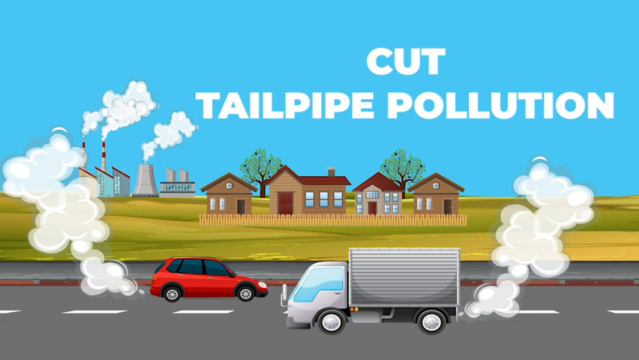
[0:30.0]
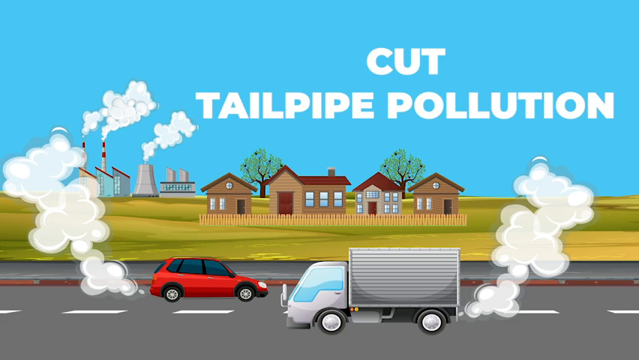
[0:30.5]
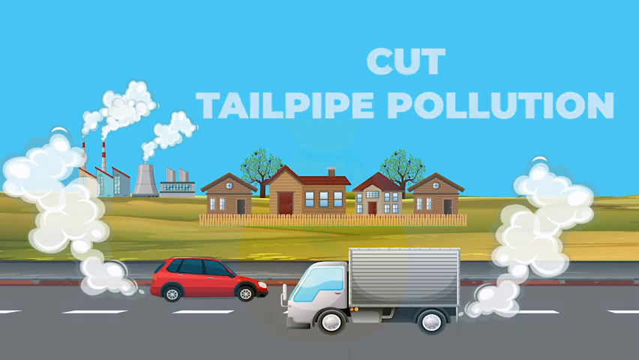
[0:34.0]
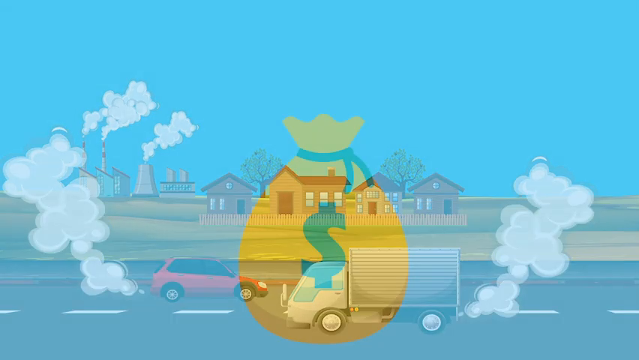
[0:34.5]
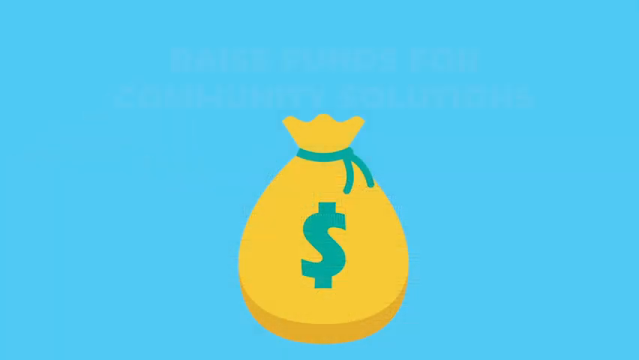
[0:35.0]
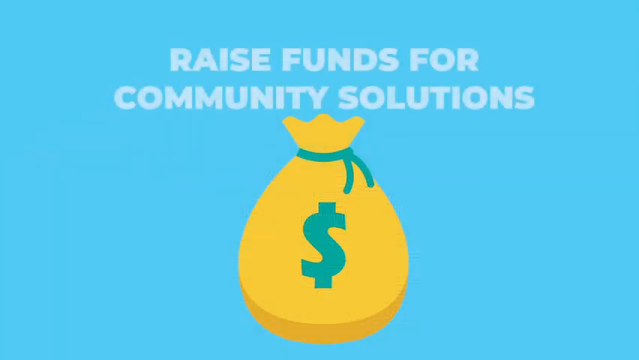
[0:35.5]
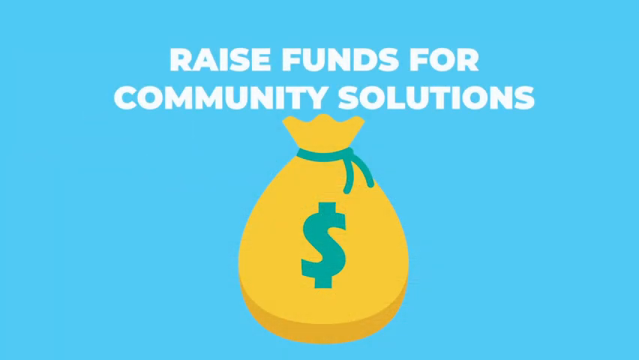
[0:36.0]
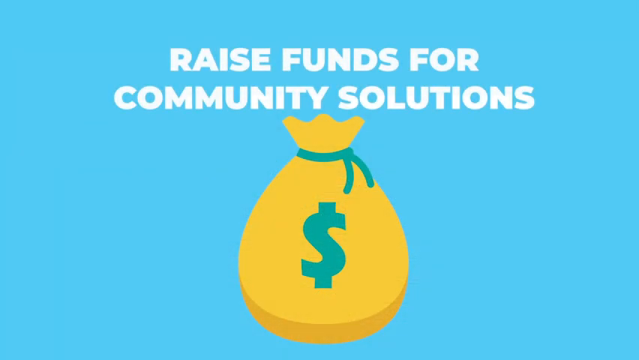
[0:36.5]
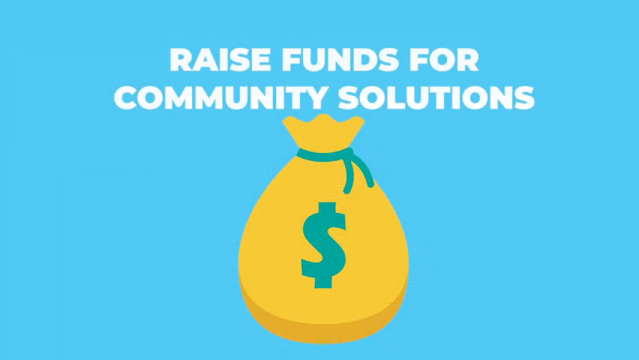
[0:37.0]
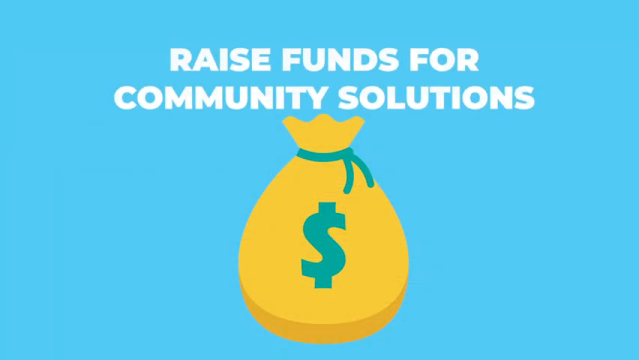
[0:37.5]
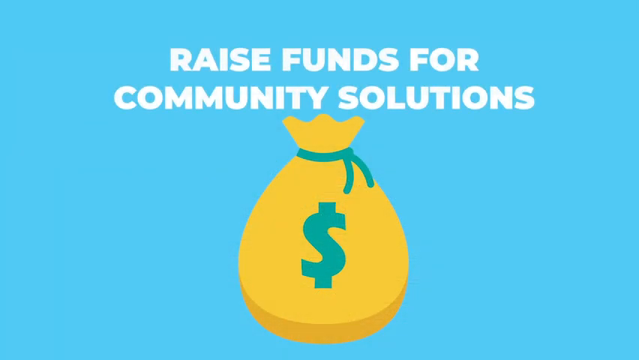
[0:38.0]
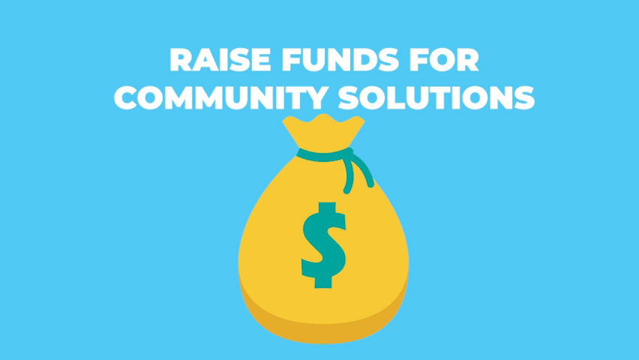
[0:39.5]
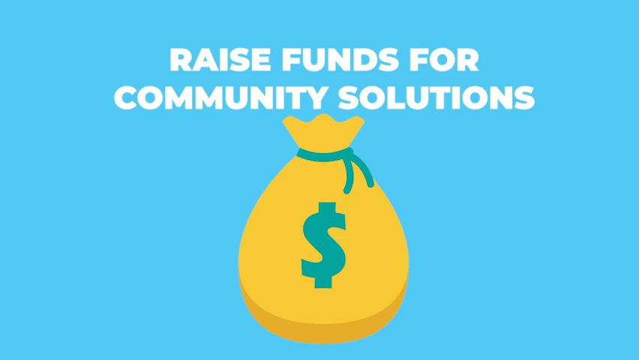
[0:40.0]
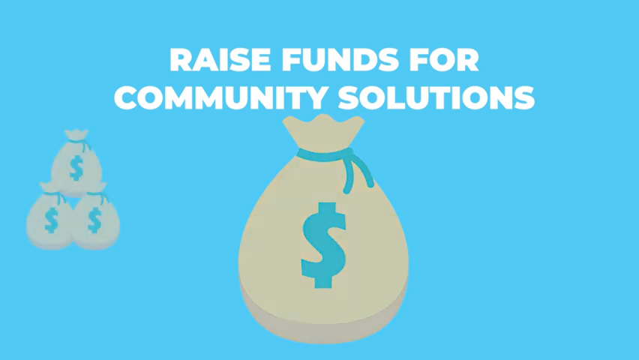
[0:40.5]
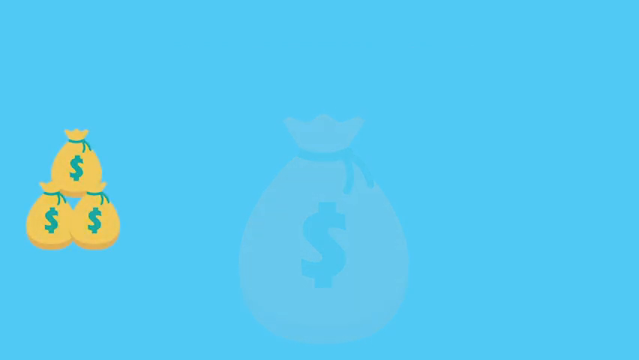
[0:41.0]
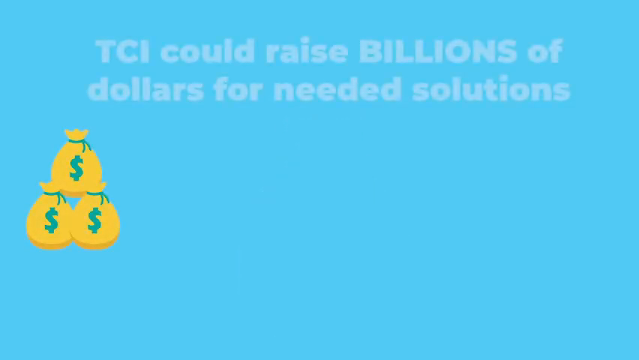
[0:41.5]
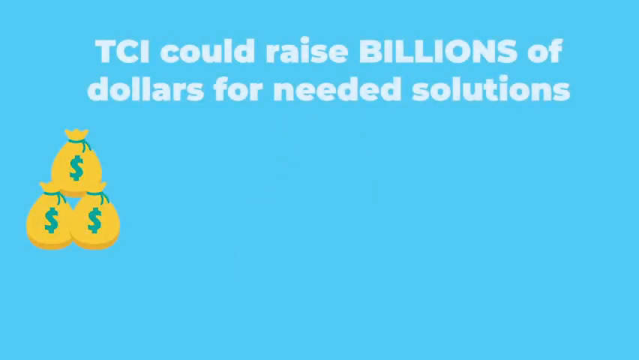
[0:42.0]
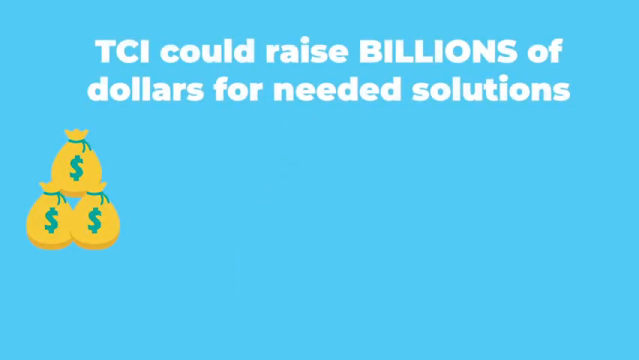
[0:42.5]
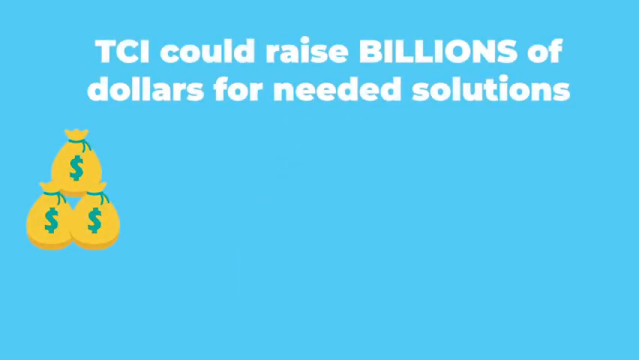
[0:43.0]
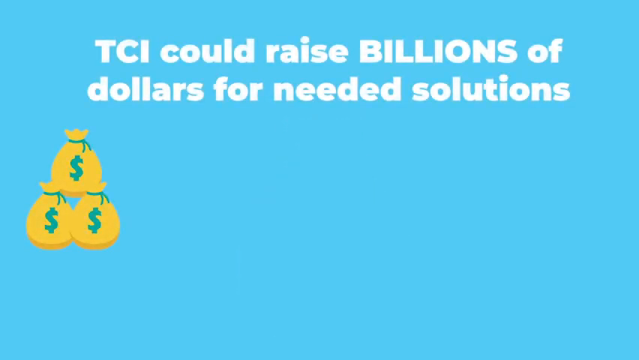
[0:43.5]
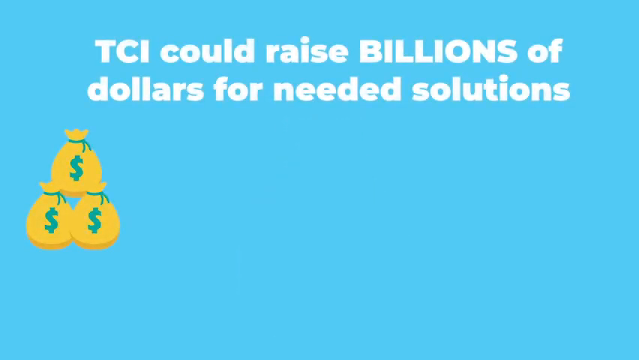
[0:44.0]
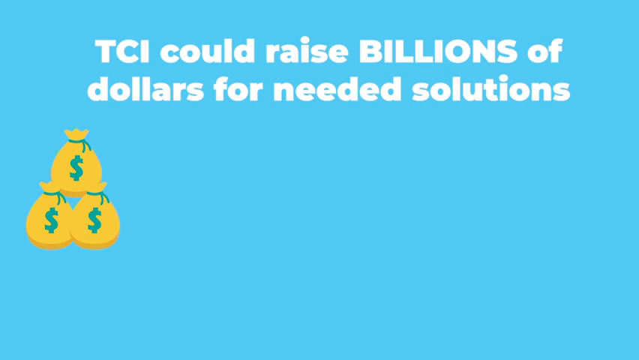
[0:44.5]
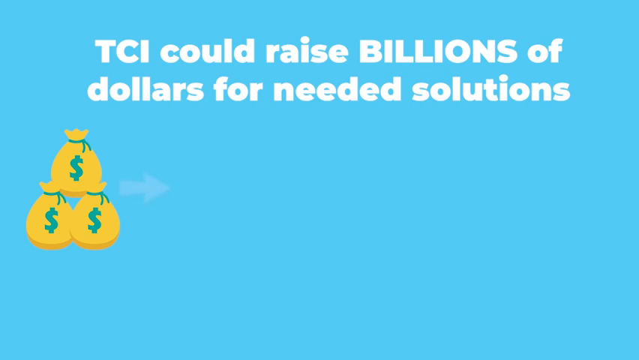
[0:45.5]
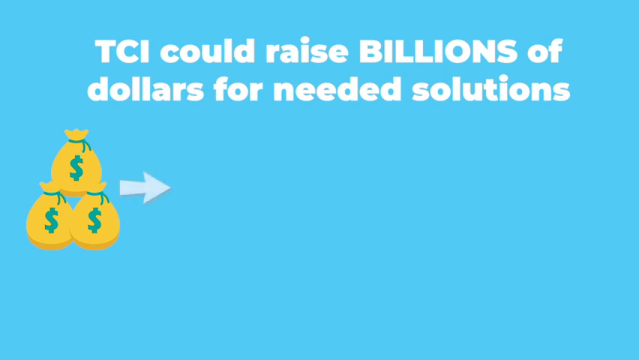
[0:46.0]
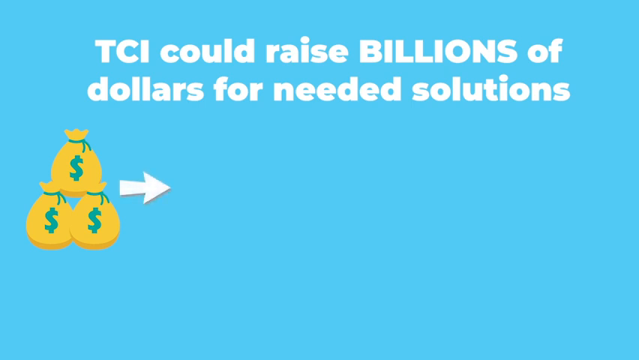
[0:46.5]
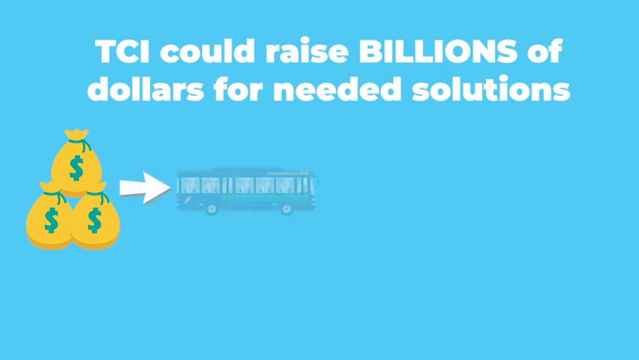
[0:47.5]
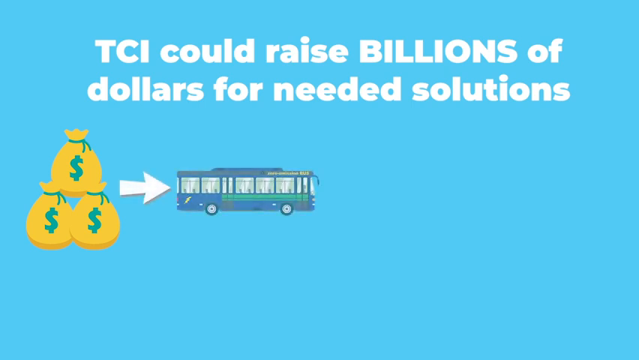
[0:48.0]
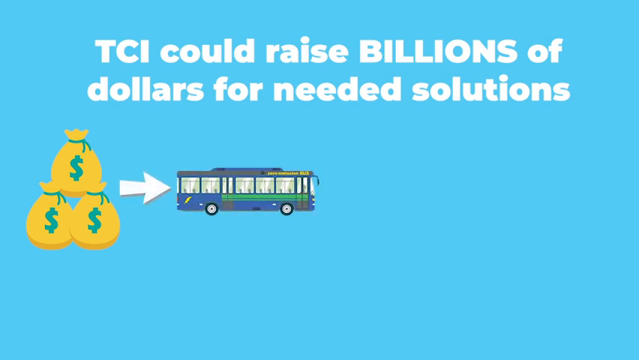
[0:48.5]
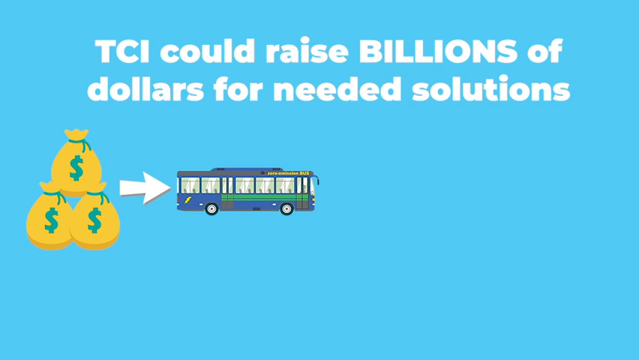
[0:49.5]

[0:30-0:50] The flat, two-dimensional cartoon image reading "cut tailpipe pollution" shows four homes in an open area, with something industrial in the background giving off lots of smoke. In the foreground is a highway with a red car and a box truck driving in opposite directions, a ton of exhaust coming out of the back of both. The scene changes to a light blue screen with a bag of money in the very center: a flat, two-dimensional cartoon of a yellow bag tied shut, with a dollar symbol in the middle in a kind of greenish-blue color. At the top, white text reads "raise funds for community solutions." It transitions to the blue background with three sacks of money and the white text "TCI could raise billions of dollars for needed solutions." Next to the sacks of money, a white arrow points to the right, and an image of a city transportation bus pops up; it is mostly blue, with a lot of windows down the side and a few graphics in yellow, green and red.